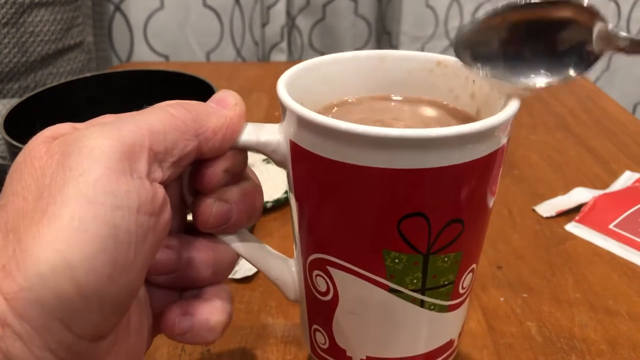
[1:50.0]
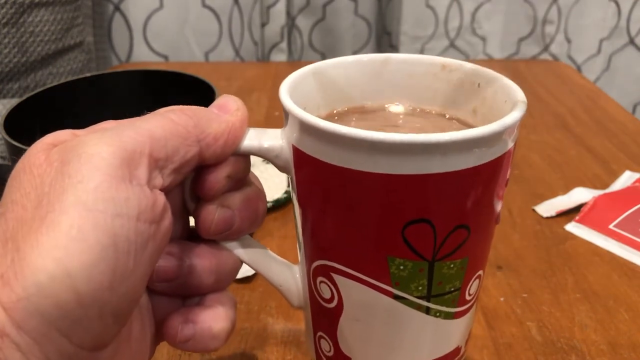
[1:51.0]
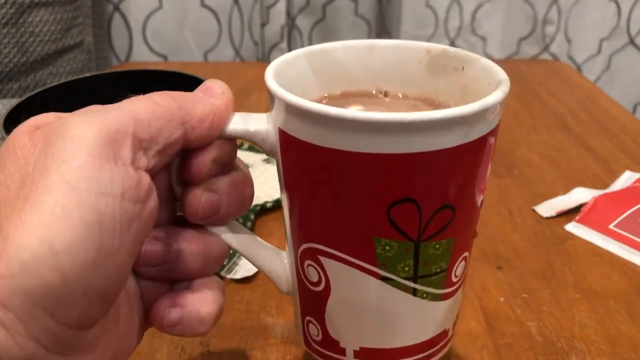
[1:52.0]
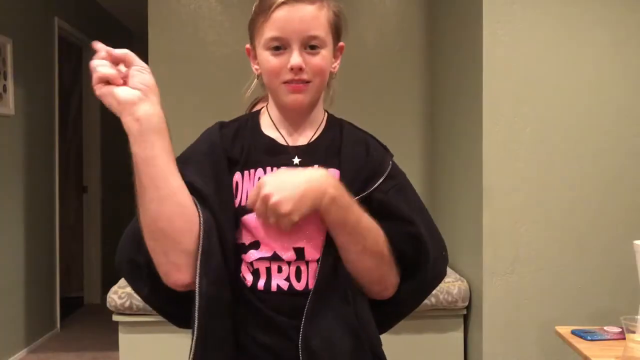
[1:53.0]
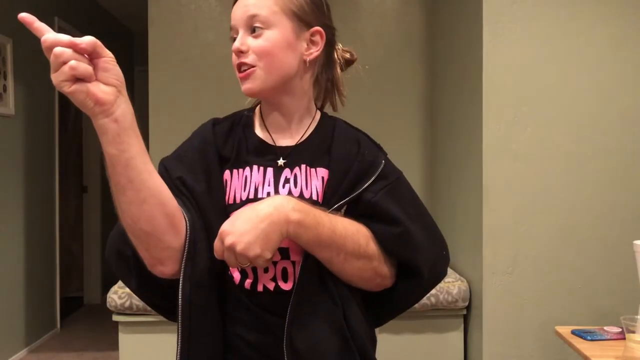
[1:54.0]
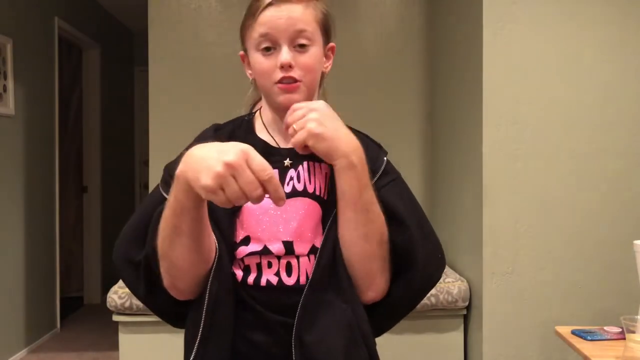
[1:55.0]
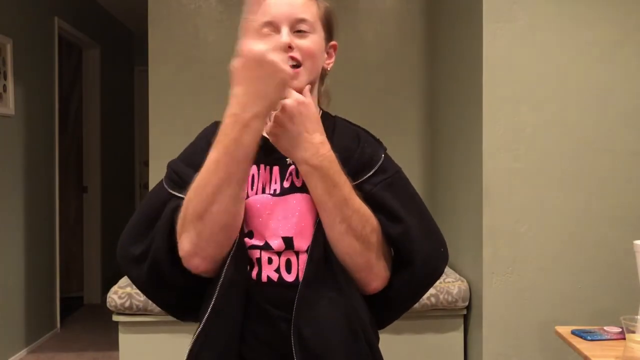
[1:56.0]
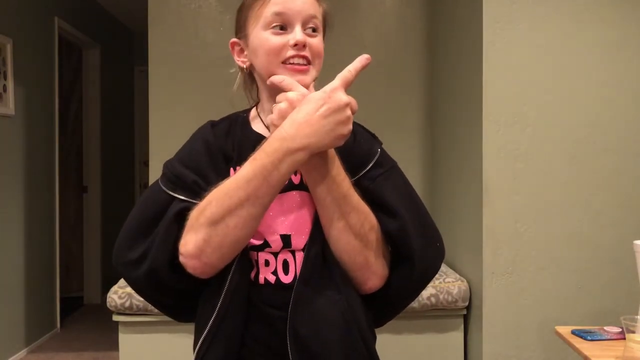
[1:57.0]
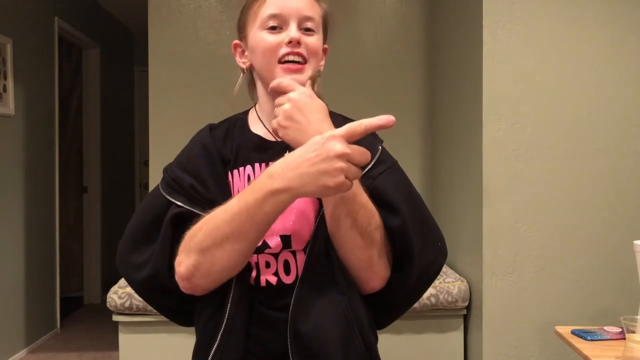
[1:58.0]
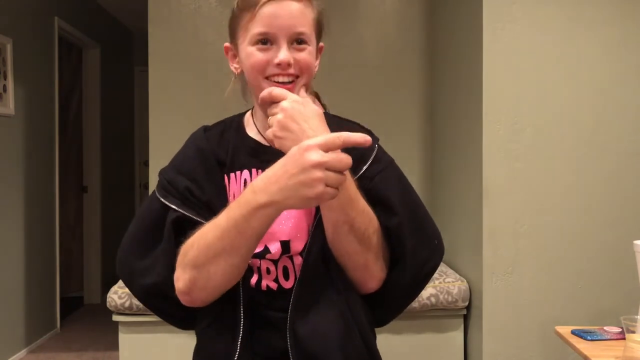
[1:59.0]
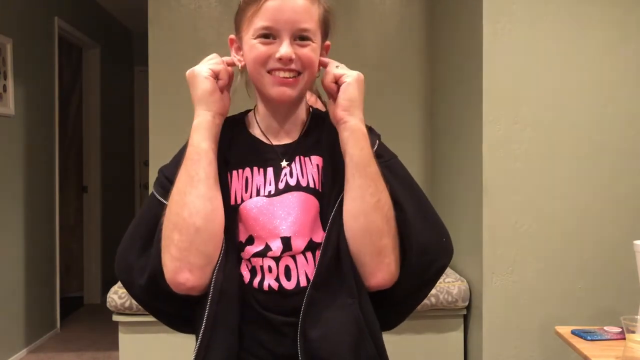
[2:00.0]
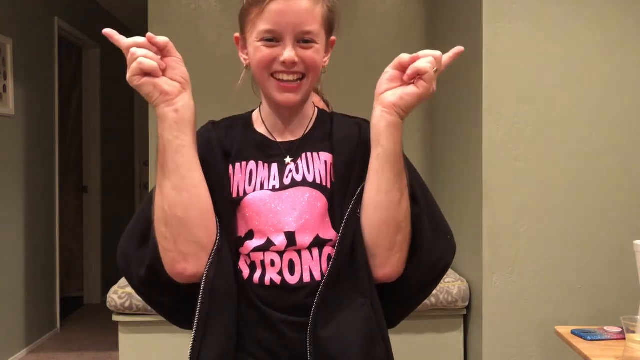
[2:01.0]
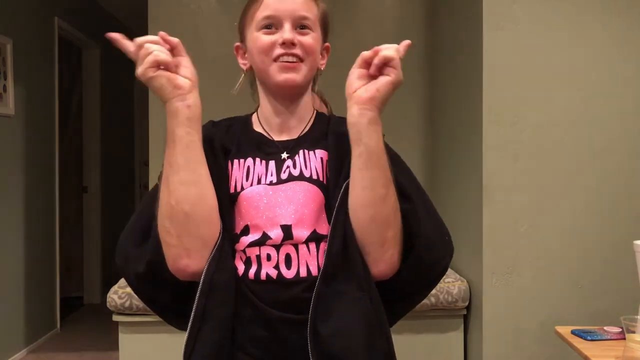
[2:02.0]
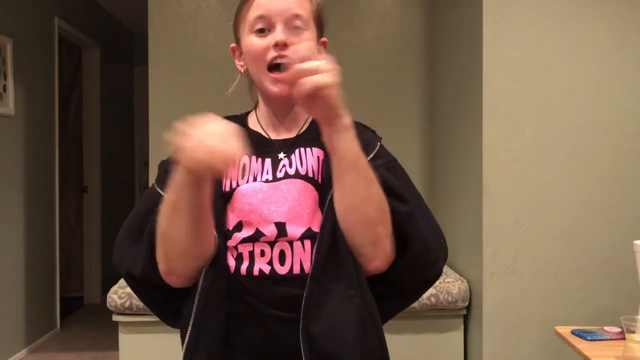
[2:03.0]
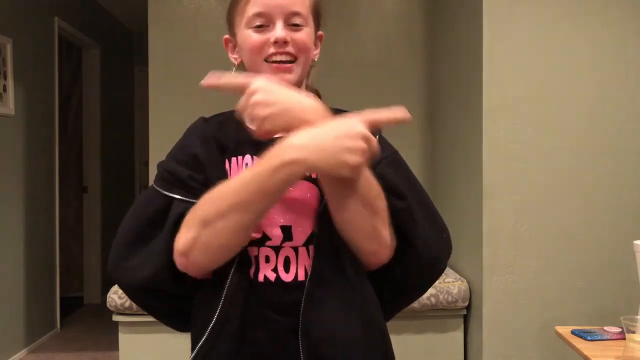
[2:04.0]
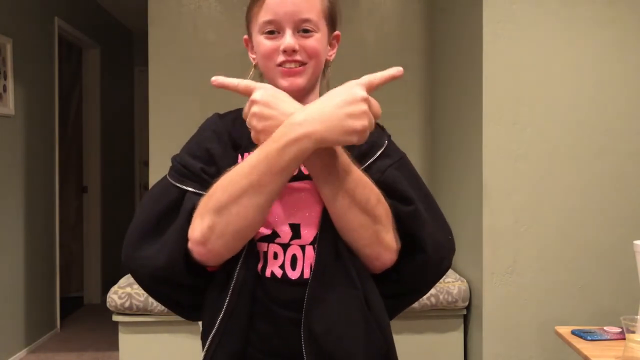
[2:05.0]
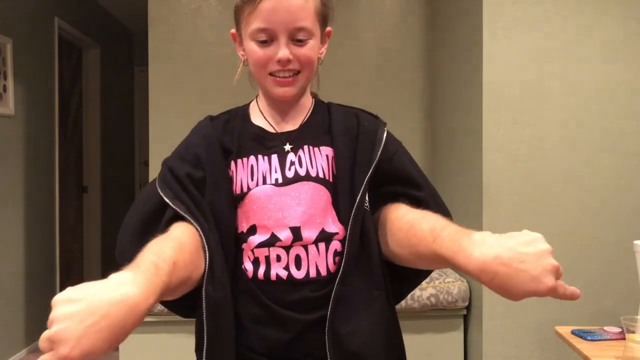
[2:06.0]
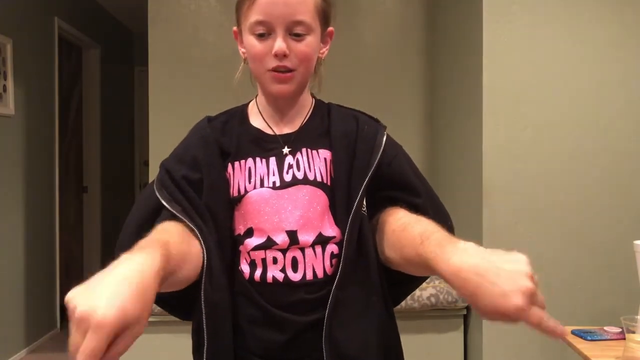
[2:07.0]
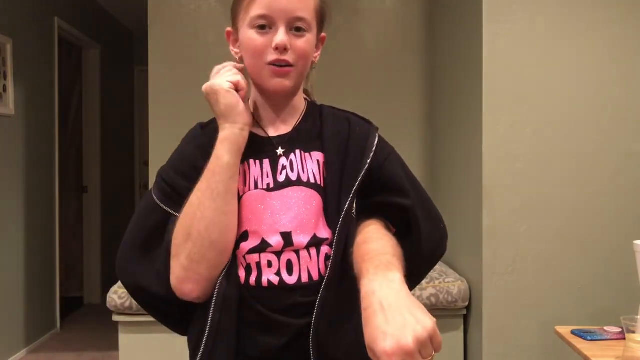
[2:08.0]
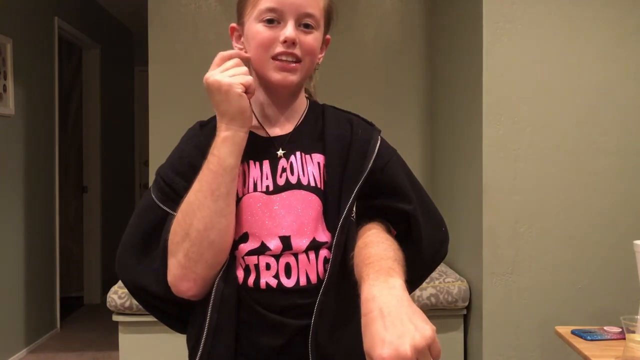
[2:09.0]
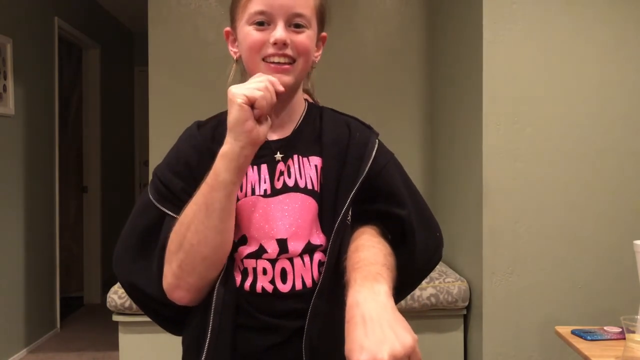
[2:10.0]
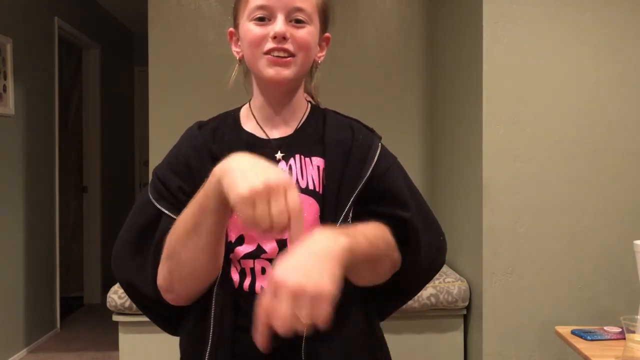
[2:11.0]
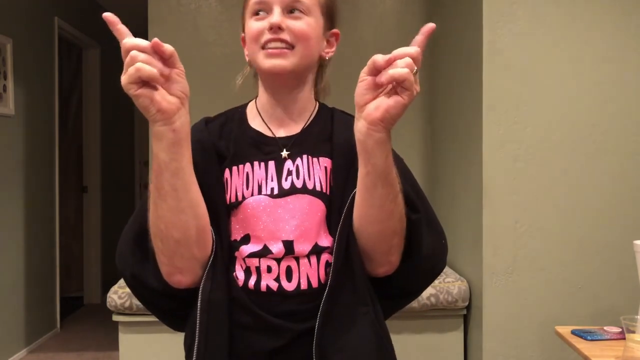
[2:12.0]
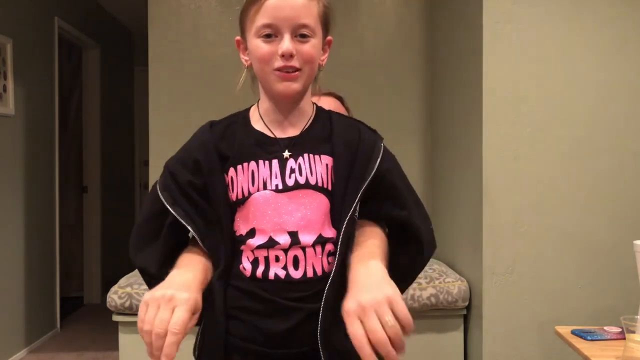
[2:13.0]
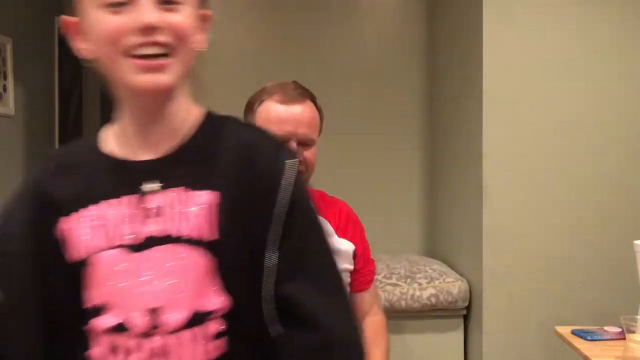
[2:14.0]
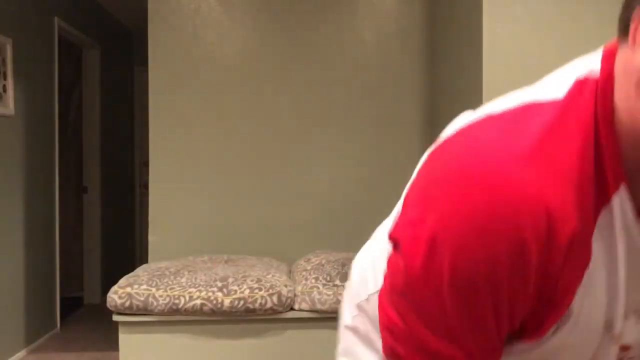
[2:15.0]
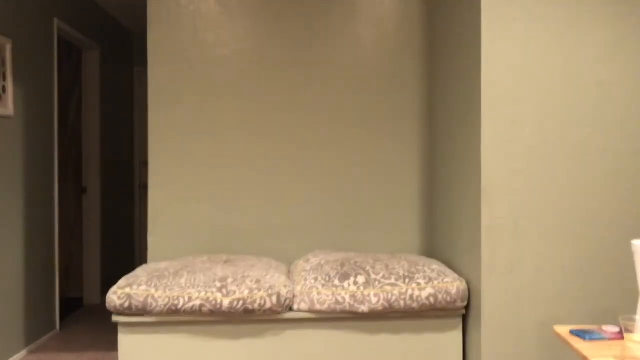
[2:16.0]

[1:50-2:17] The person taps the coffee mug about eight more times, and then the video changes to a kid wearing a black shirt and kind of a black windbreaker, with an adult man standing behind her waving his arms around as if they were hers. She smiles and looks toward the left side of the screen; his right arm points up and his left is kind of held in front of her, and she pretends to talk while the arms and hands move independently of her. He uses his left hand to kind of make a thoughtful pose with his fingers under her chin while pointing up in the air with his right hand, then moves the hand on her chin up and down, making it harder for her to talk. He touches her ears, and she begins to giggle and laugh. He points back and forth kind of by her head as she keeps laughing, itches her face and her chin again, and then they stop. She moves forward, he moves out from under the jacket he was using to cover himself, and a middle-aged man in a white and red shirt gets up very quickly, laughing. It looks like a fun dad and daughter video moment.